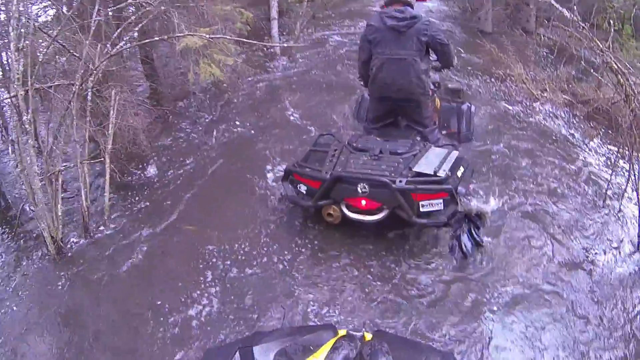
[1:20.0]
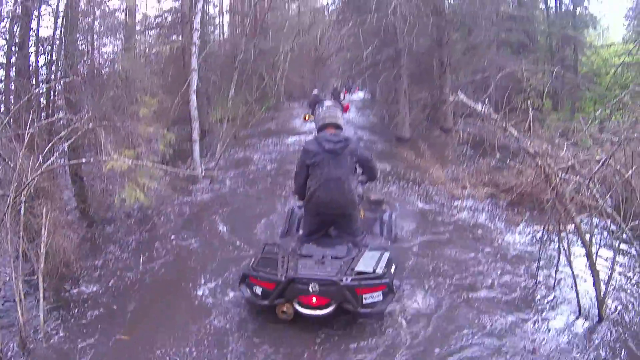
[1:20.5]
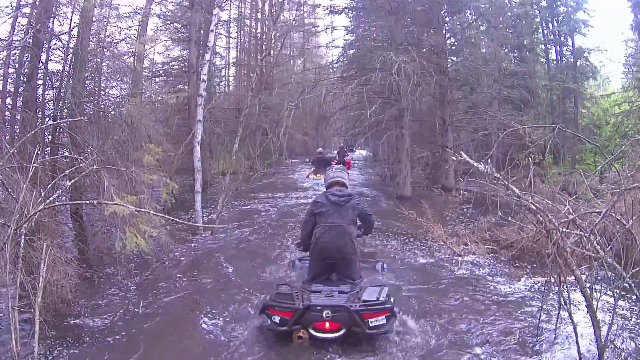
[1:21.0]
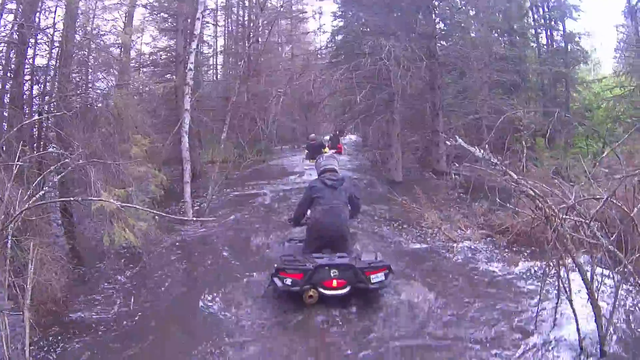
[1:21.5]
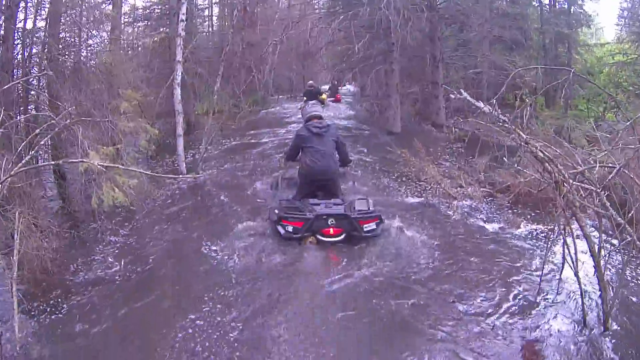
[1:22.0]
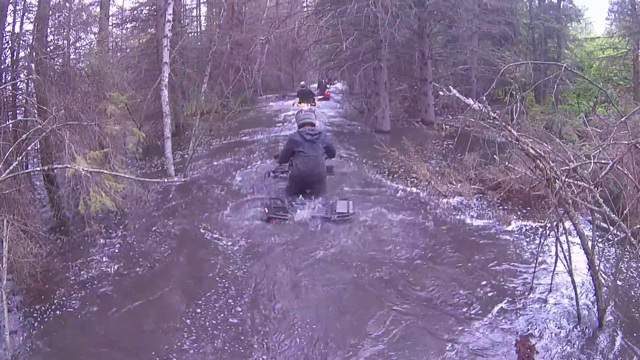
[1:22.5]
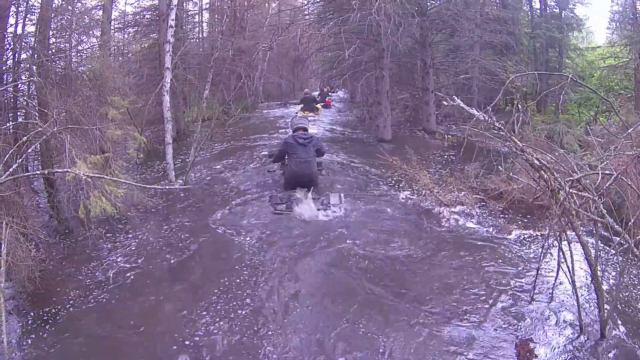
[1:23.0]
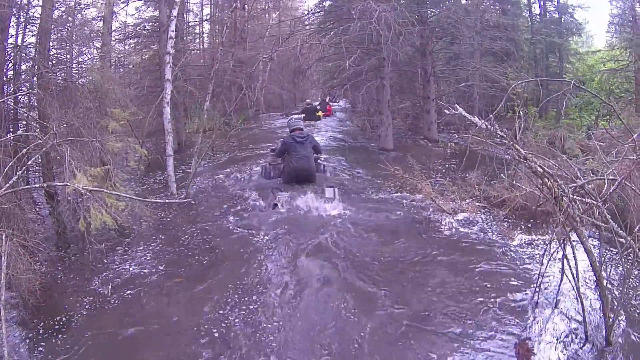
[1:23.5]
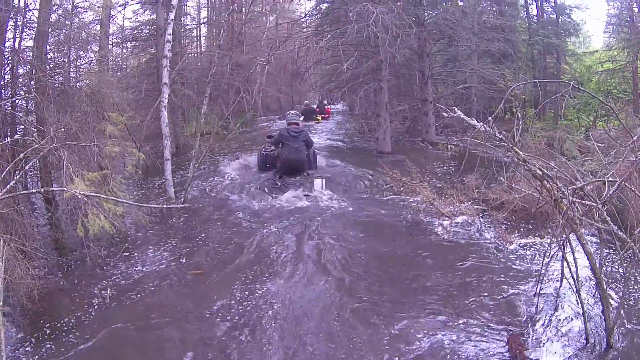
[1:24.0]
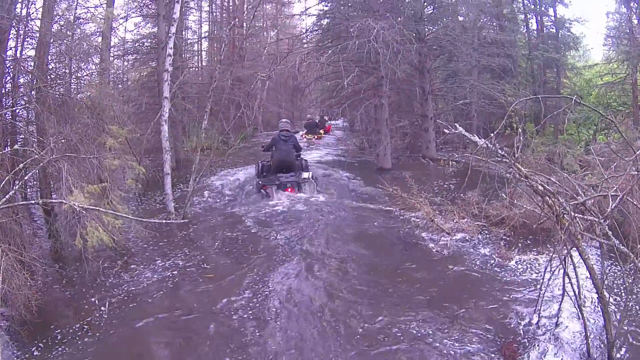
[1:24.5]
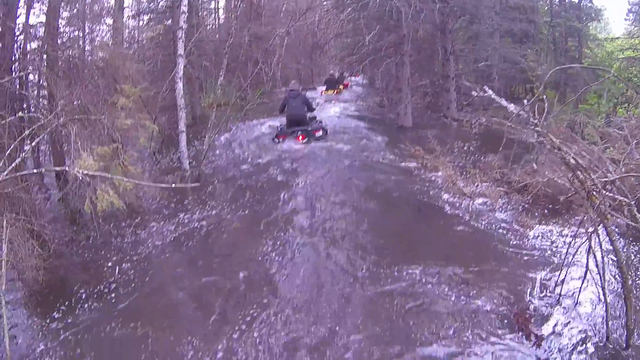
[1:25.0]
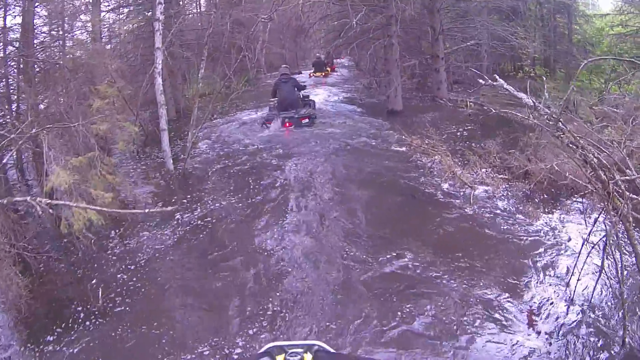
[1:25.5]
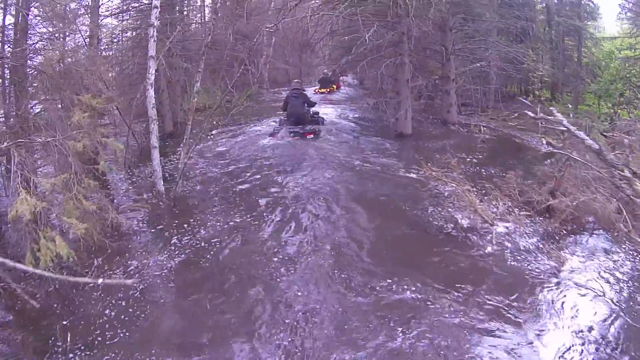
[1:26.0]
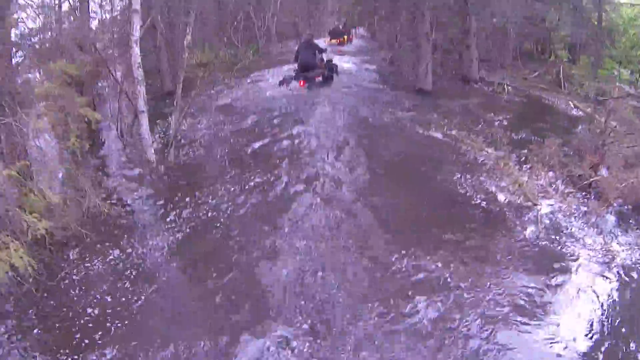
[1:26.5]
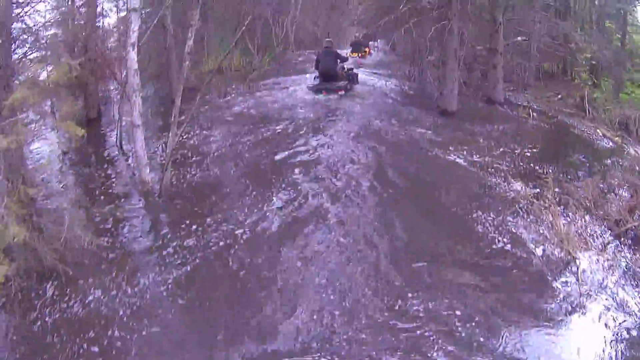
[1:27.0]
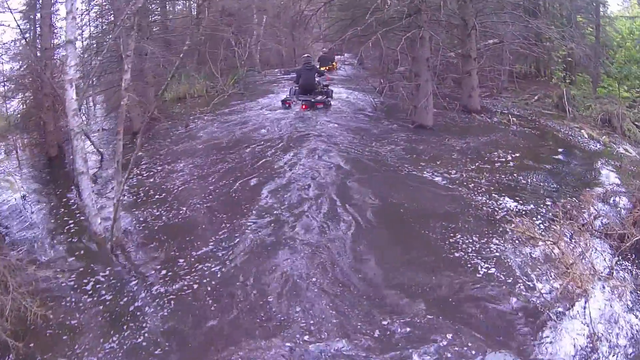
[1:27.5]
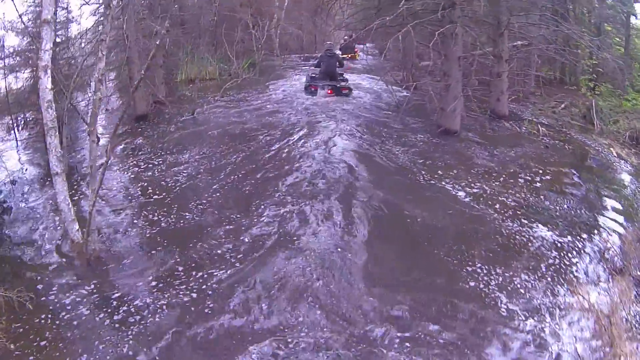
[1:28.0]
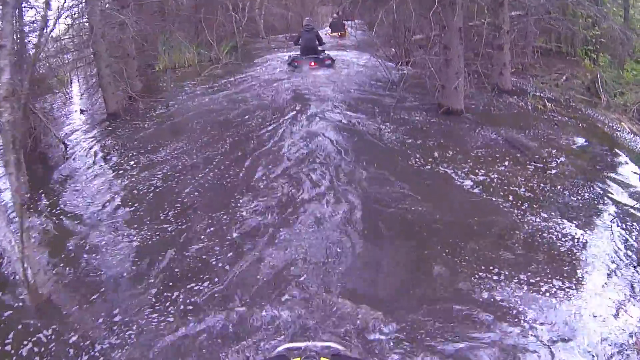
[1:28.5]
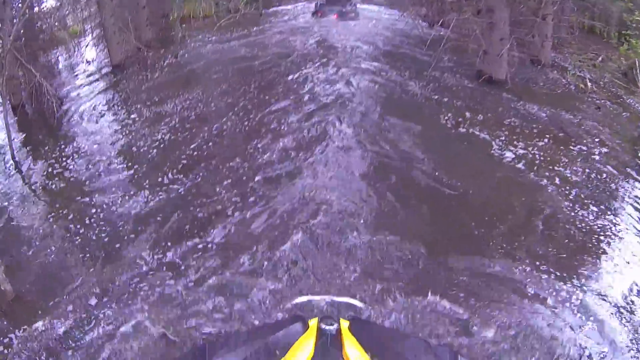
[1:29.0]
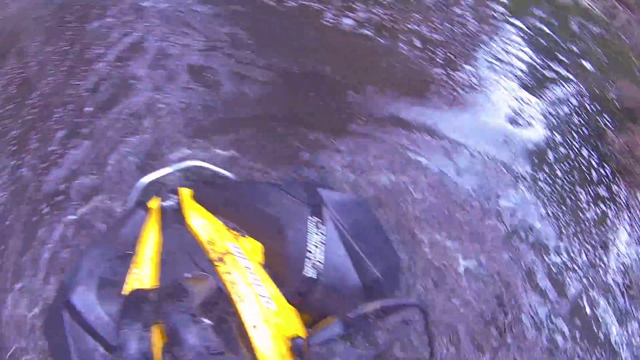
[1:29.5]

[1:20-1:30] The guy in front of the person filming struggles with a circular rotation under the water, which fills with mud and thick black water. It is very dirty, and branches surround him. He stands up a little more, apparently trying to catch his balance, and struggles to get his machine through the rough area. He gets through, but his entire vehicle gets submerged underneath the water. There is nothing around them; it is all one big body of water.